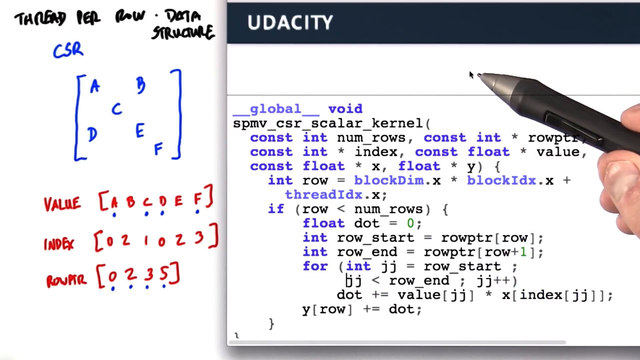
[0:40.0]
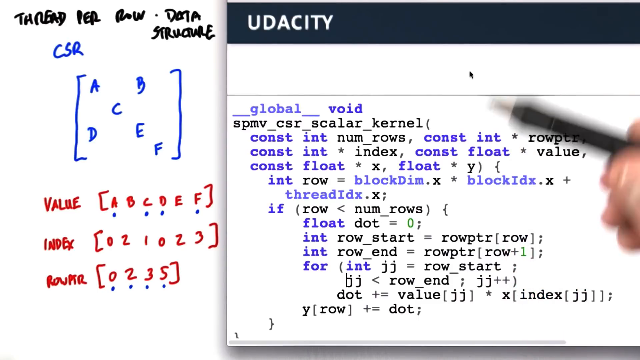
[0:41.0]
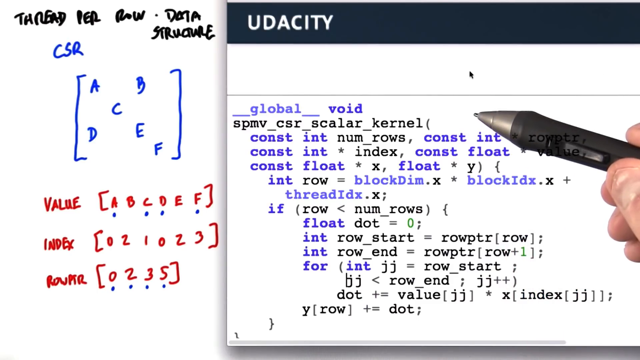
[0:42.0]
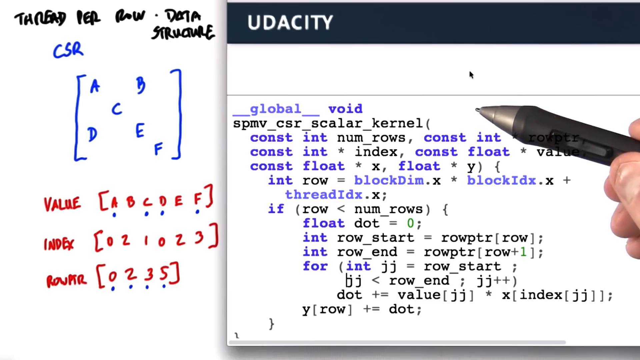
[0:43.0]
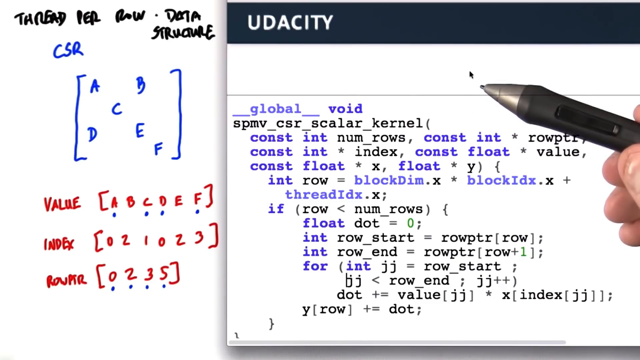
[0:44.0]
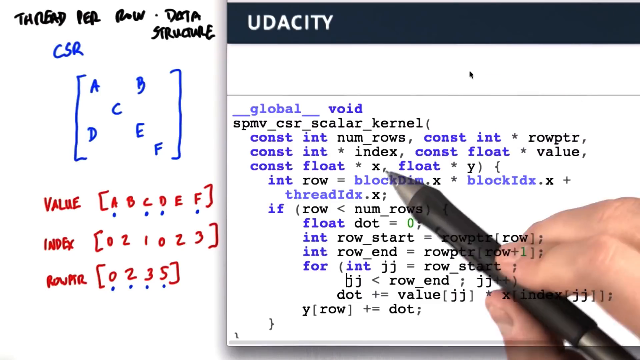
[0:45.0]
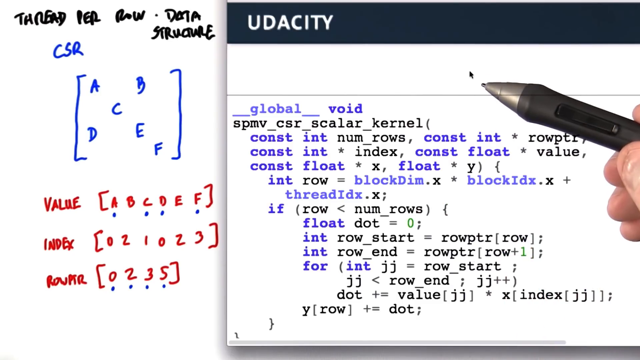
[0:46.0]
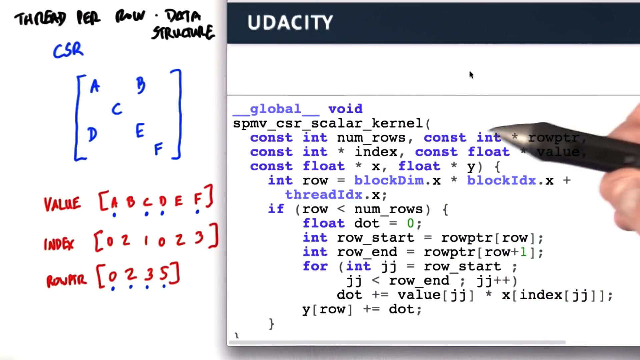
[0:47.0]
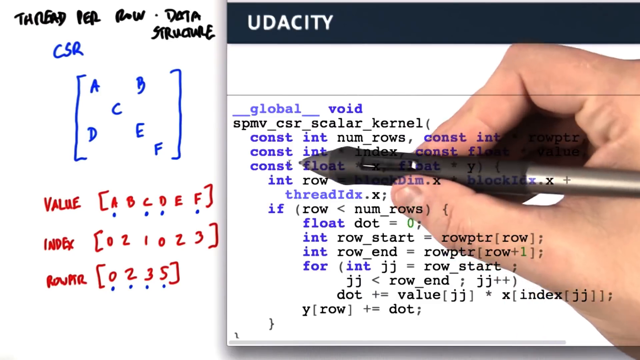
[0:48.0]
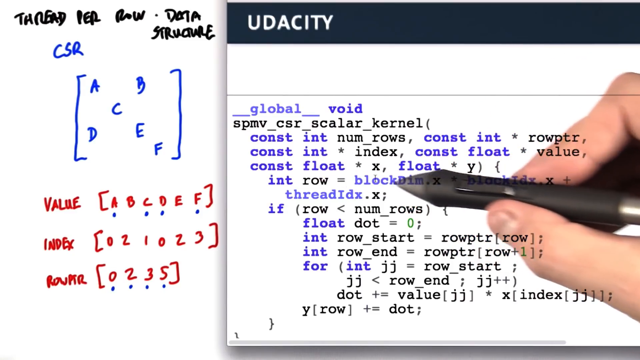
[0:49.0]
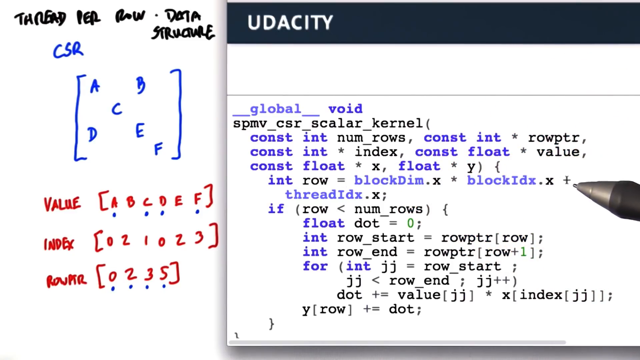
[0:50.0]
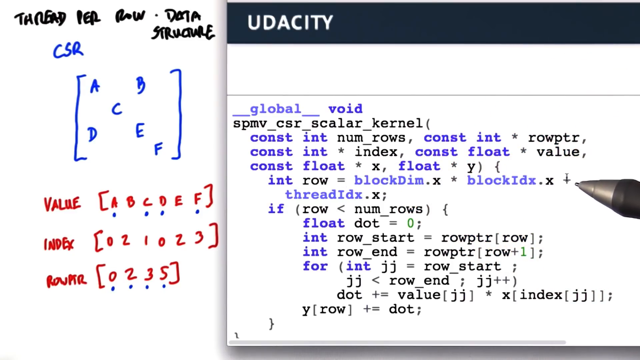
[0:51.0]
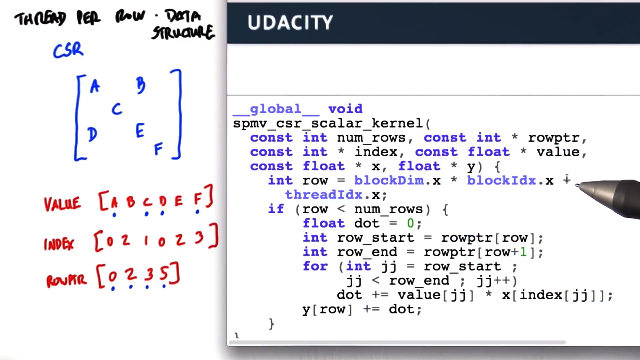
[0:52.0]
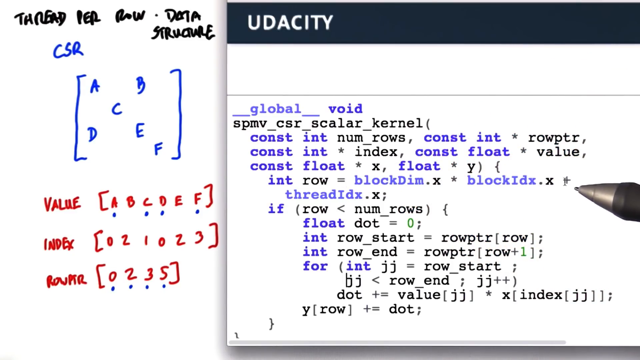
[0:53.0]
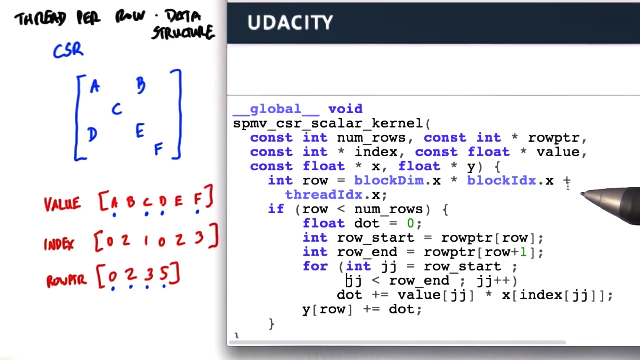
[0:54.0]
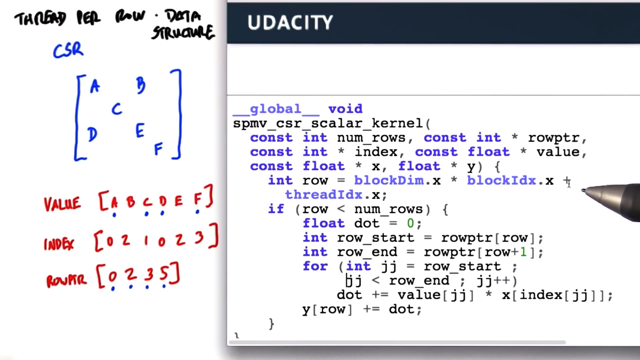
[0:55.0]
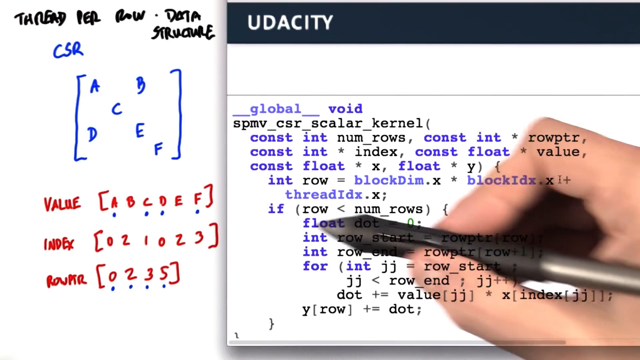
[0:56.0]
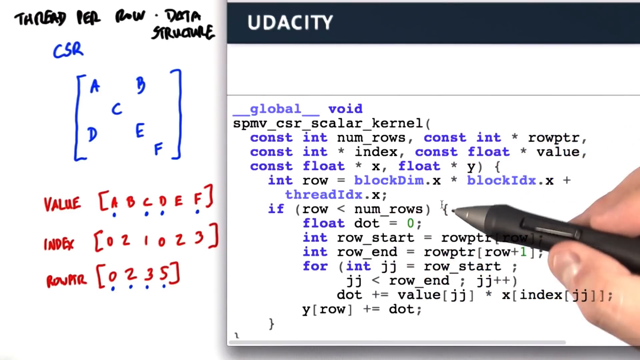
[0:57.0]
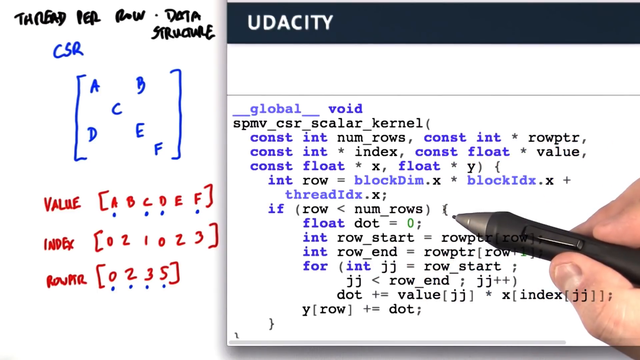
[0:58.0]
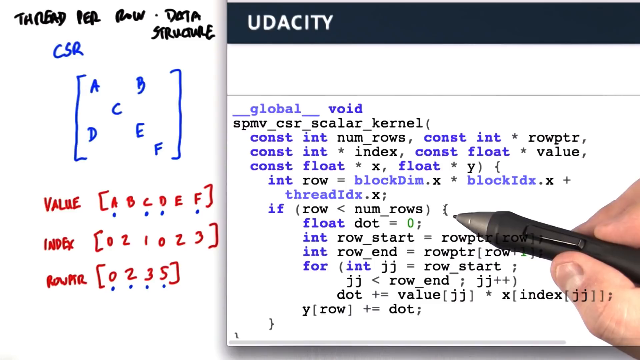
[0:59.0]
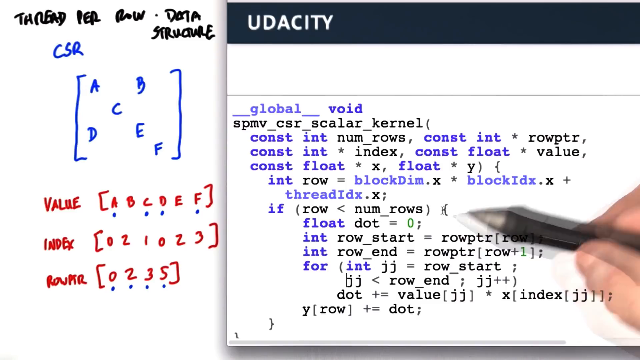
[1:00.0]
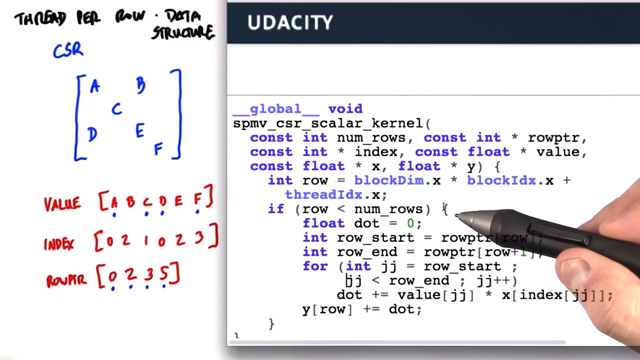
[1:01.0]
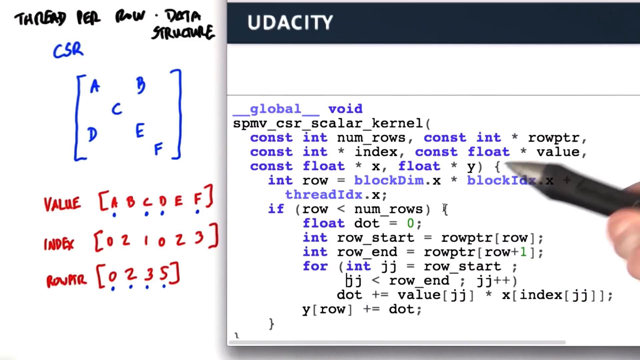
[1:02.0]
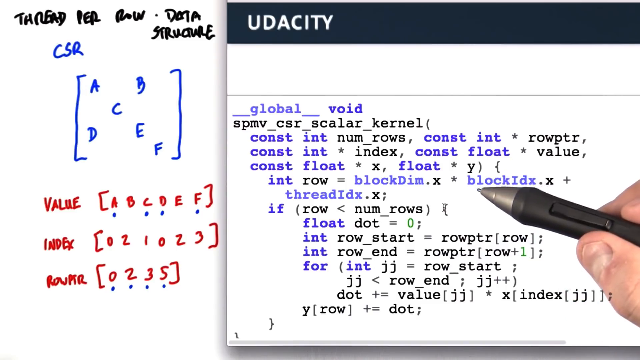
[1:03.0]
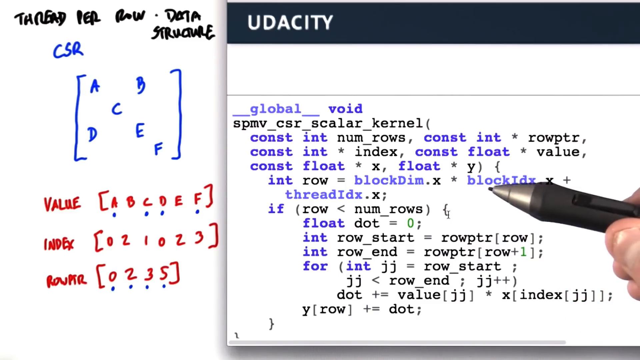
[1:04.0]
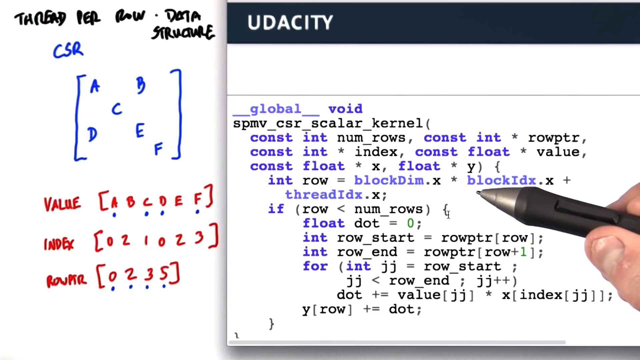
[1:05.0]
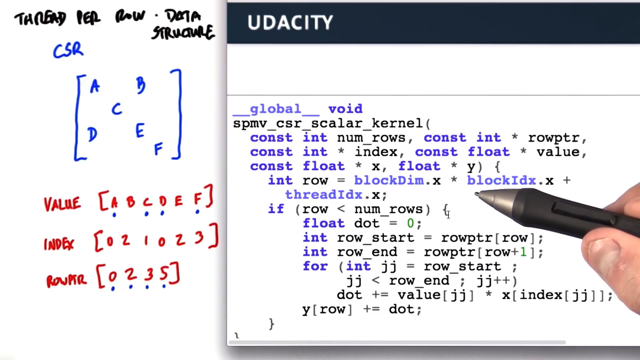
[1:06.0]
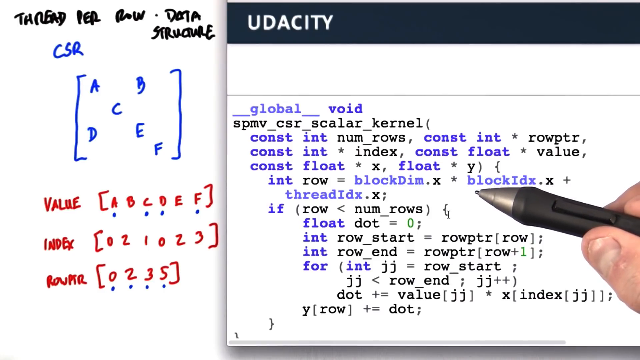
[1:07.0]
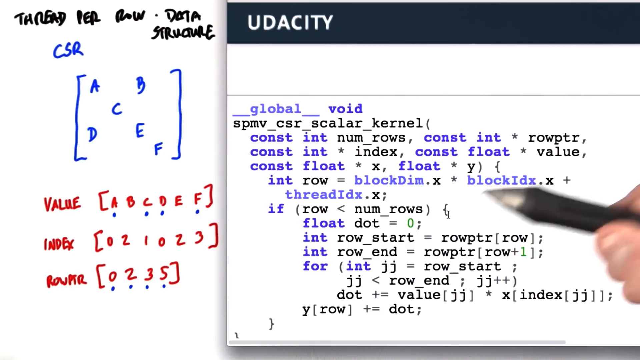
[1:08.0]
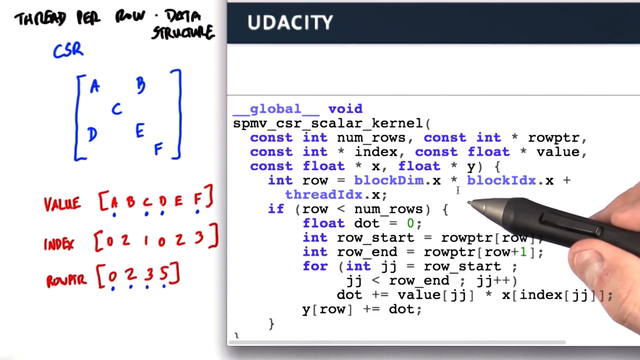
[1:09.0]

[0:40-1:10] The pen points toward the top middle of the screen, coming from the middle right, with the thumb and the tip of the index finger just visible. It points just above the line over the Udacity code, and below it is the same line of code as before. On the left side, the thread per row data structure is unchanged. The pen is moved briefly up and down, from the top of the Udacity area down to the third line of code, a few times in succession. The person explaining moves the pen point to different bits of code, down to the word "start" and then back up to the top. The image fades out and comes back with the pen slightly translucent, and the pen points toward the word "constant". He then moves it from mid-screen back to the right toward the end of the line, seemingly going through lines of code as he highlights them with his fingers and the pen as a pointer.